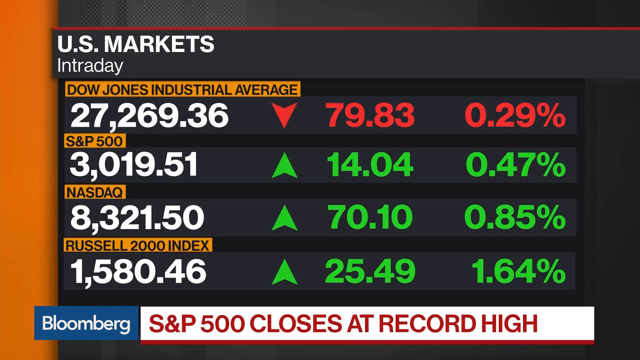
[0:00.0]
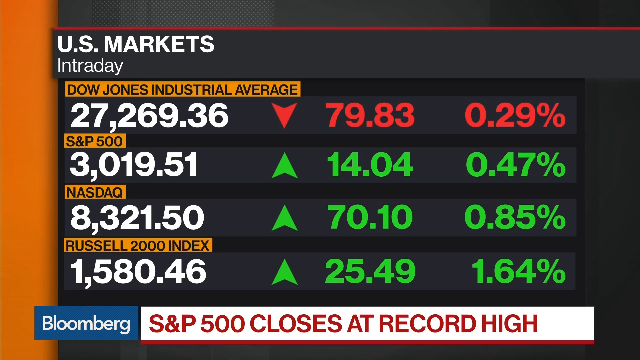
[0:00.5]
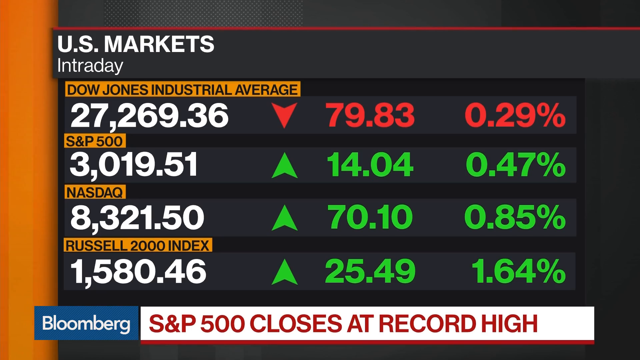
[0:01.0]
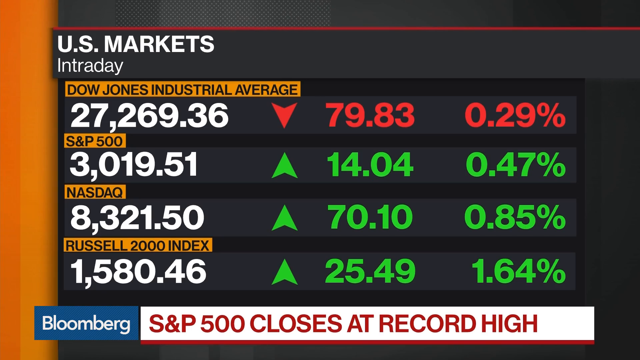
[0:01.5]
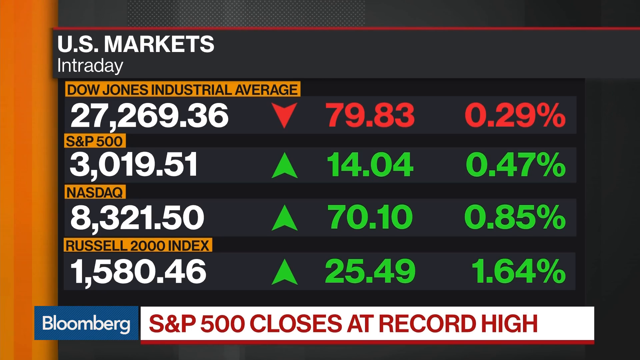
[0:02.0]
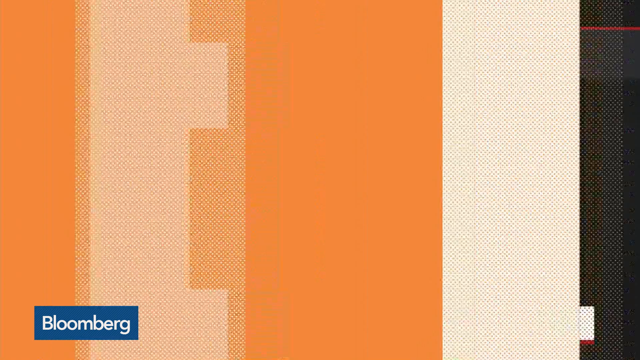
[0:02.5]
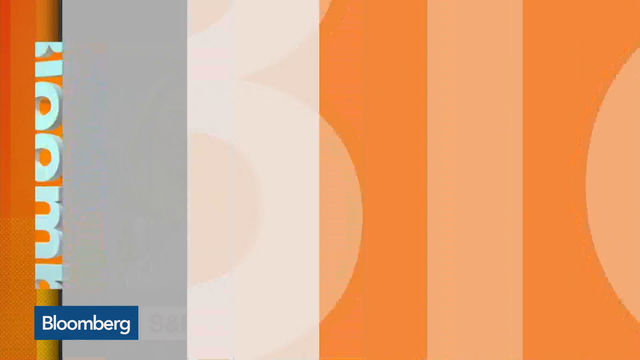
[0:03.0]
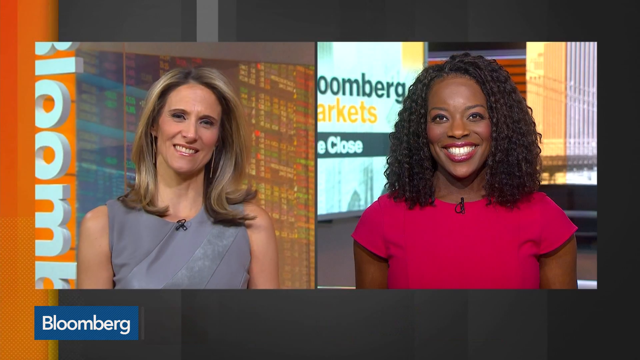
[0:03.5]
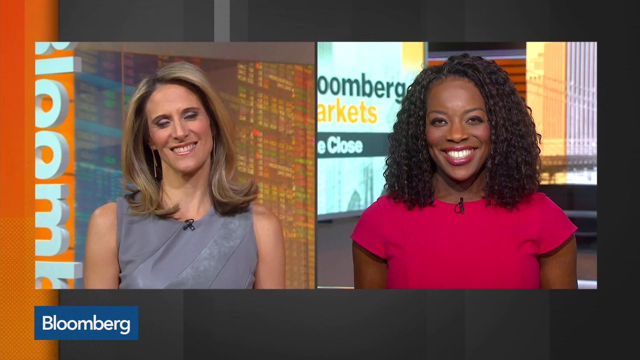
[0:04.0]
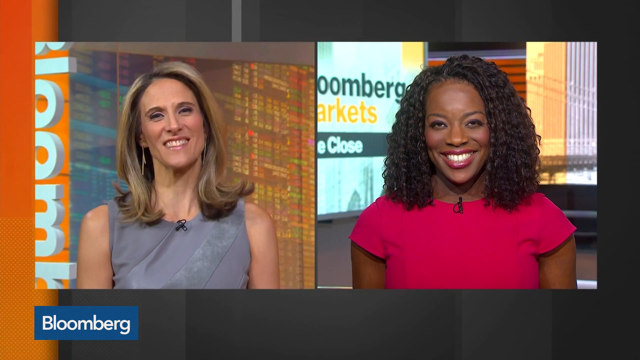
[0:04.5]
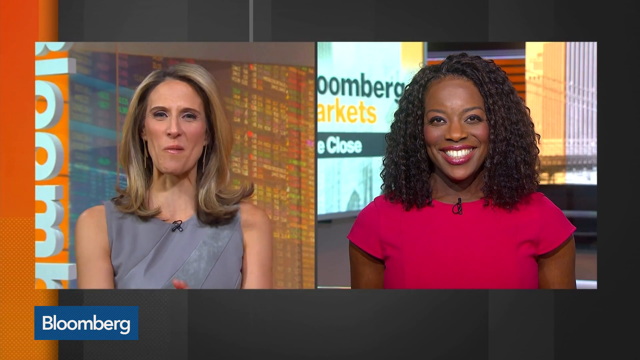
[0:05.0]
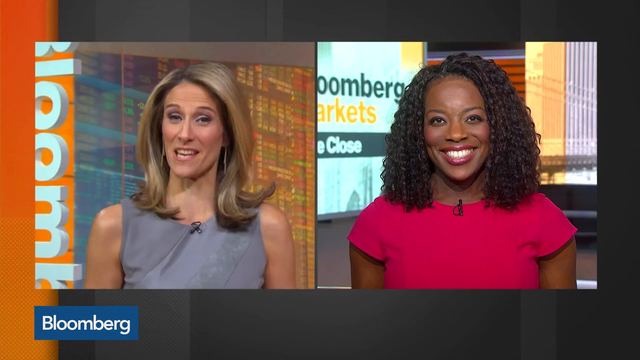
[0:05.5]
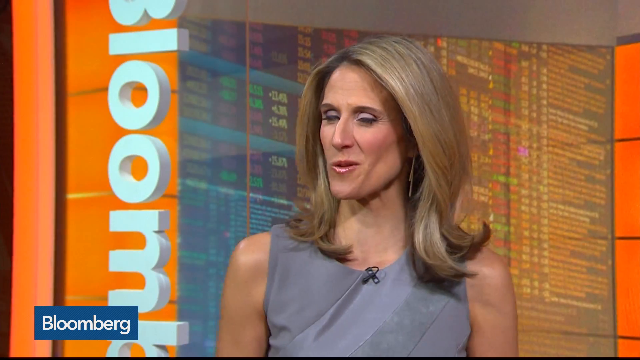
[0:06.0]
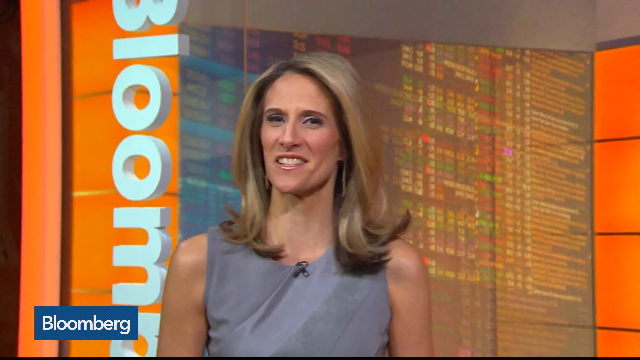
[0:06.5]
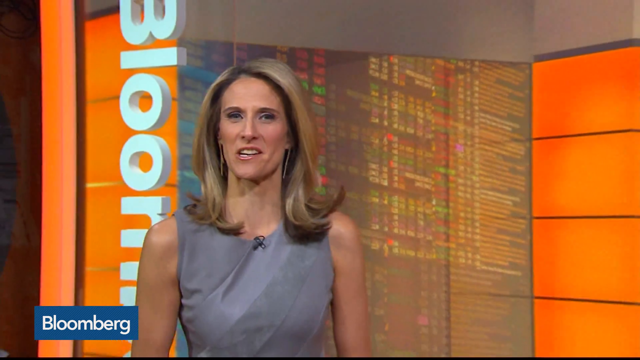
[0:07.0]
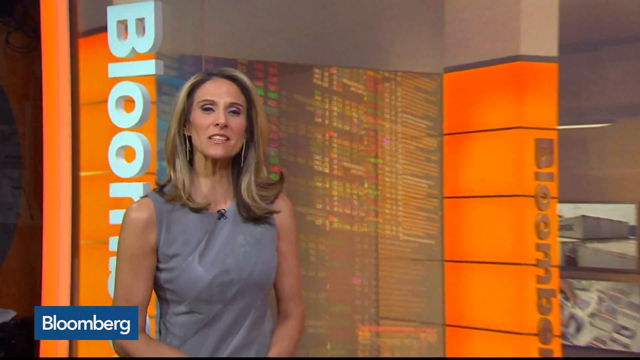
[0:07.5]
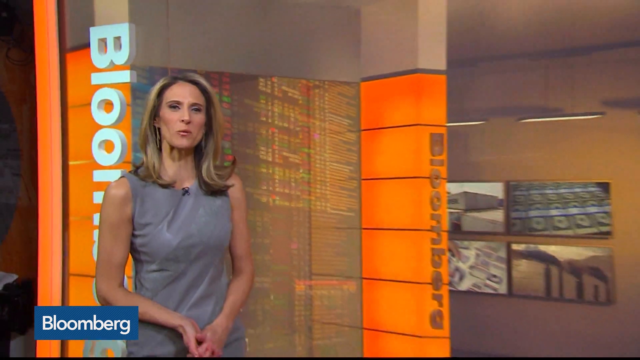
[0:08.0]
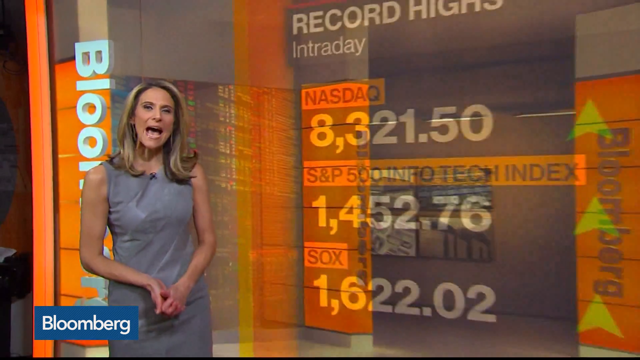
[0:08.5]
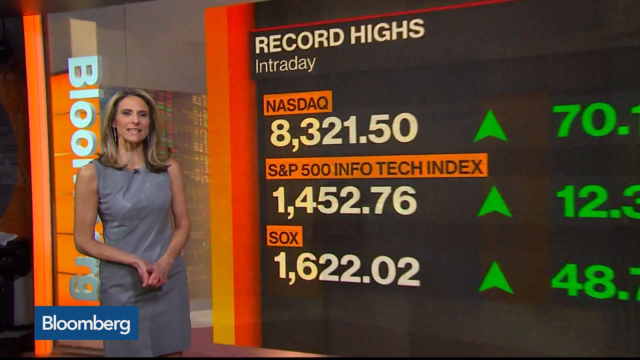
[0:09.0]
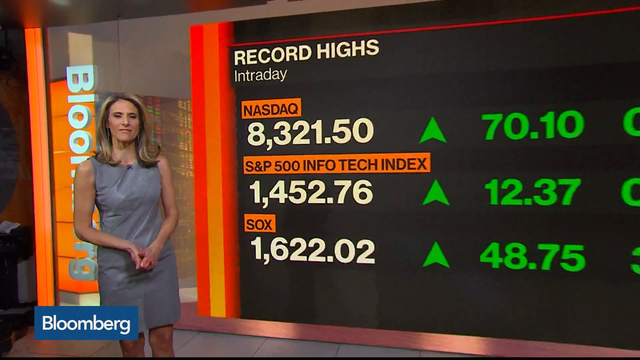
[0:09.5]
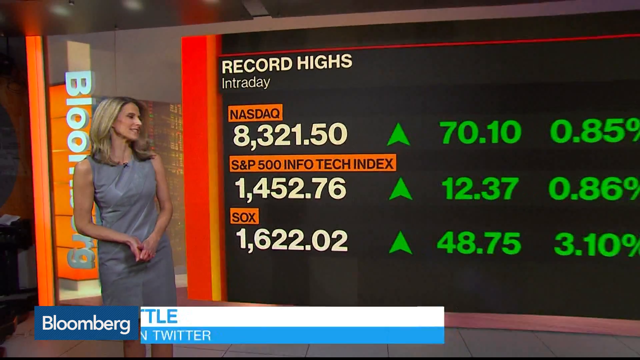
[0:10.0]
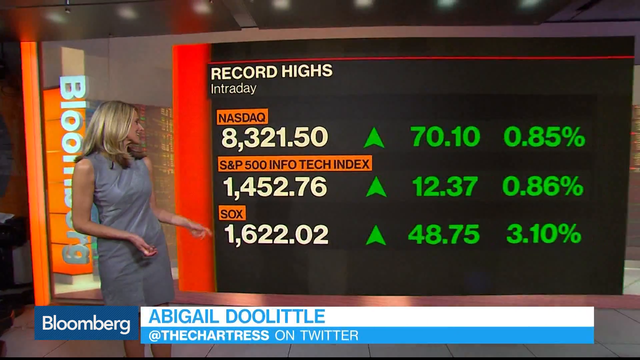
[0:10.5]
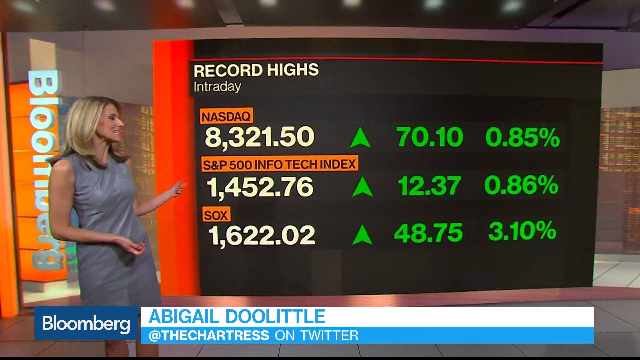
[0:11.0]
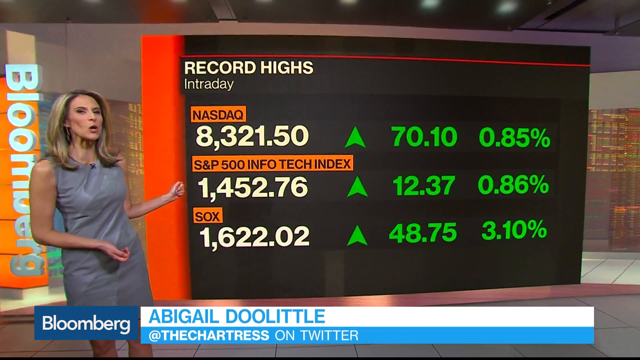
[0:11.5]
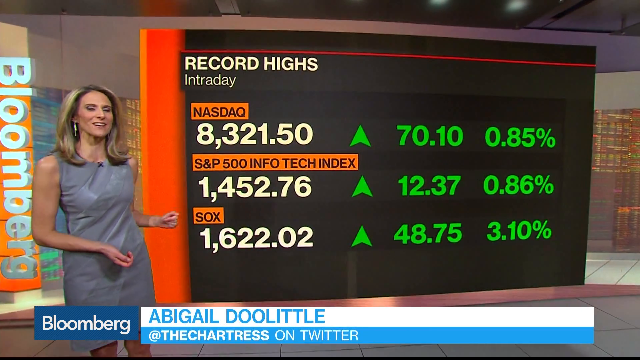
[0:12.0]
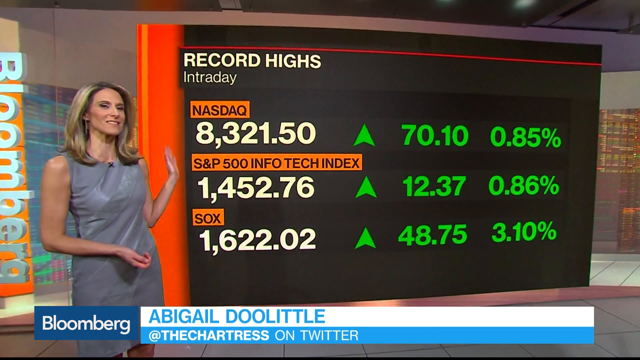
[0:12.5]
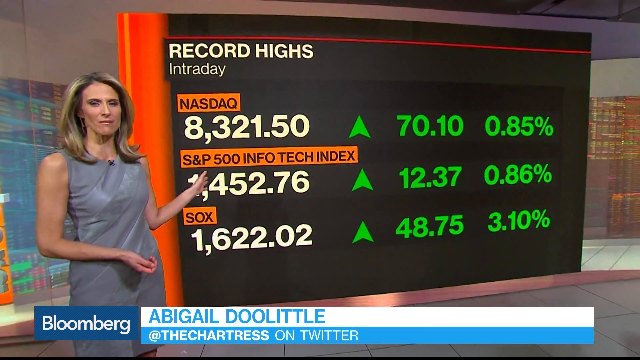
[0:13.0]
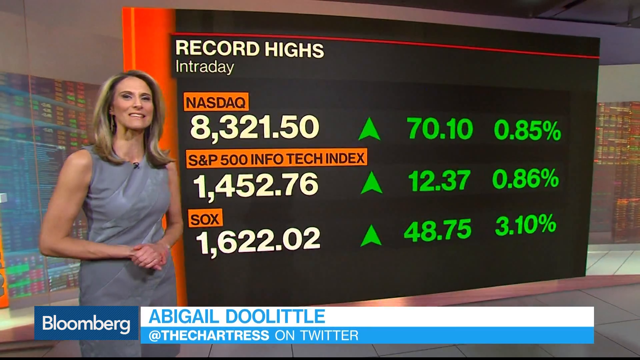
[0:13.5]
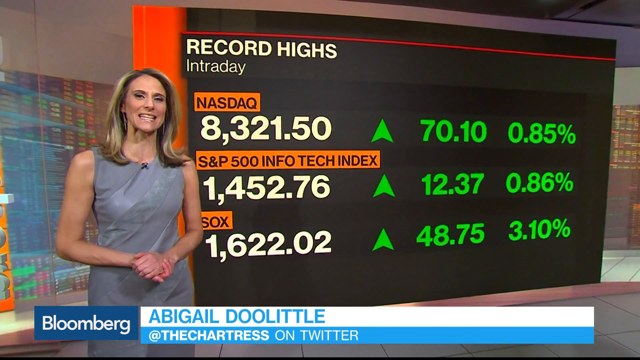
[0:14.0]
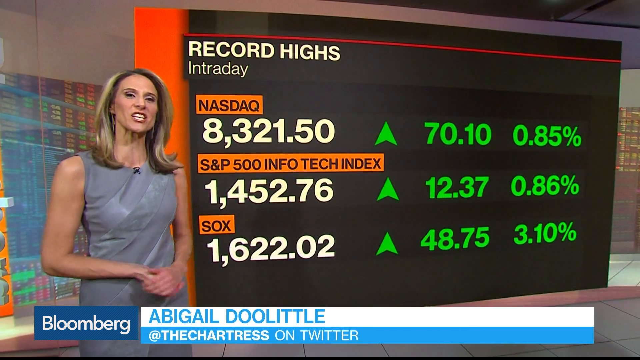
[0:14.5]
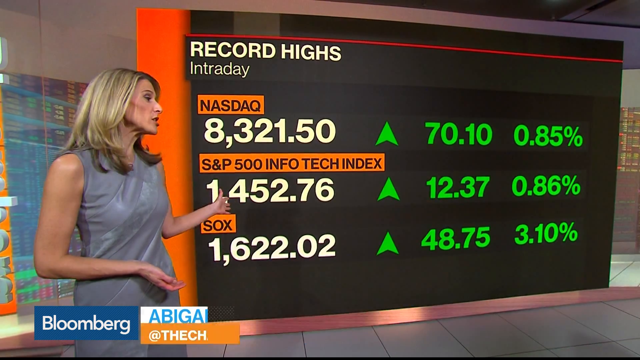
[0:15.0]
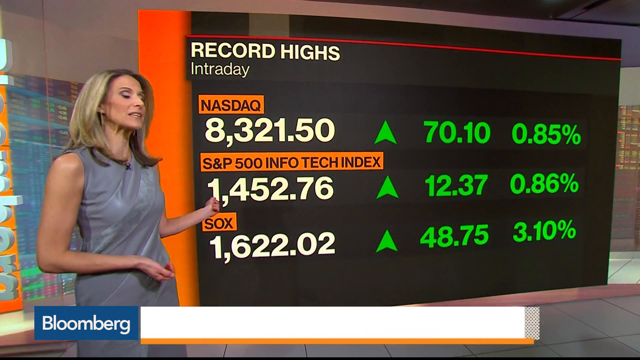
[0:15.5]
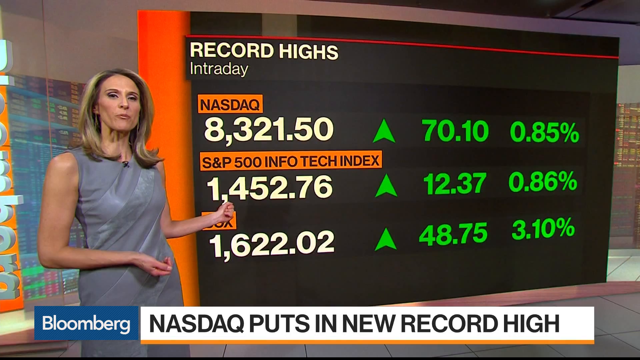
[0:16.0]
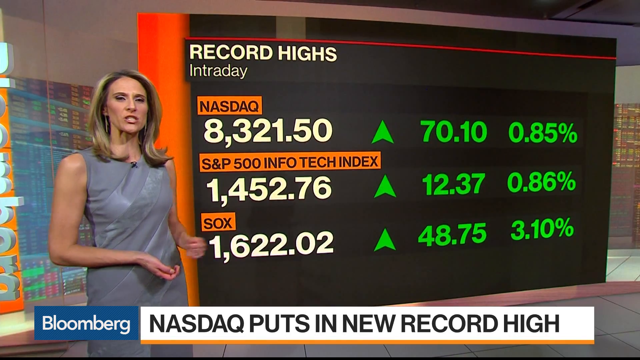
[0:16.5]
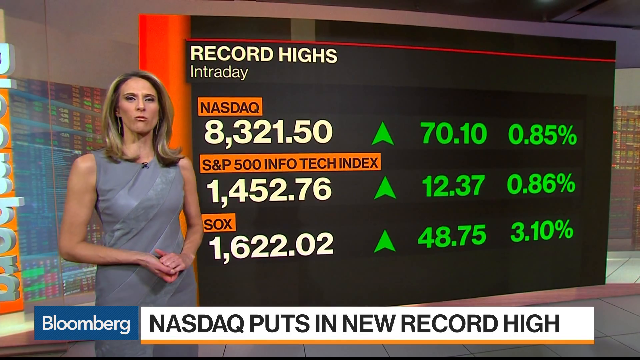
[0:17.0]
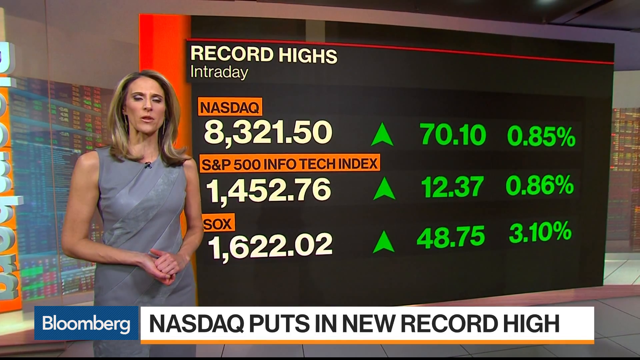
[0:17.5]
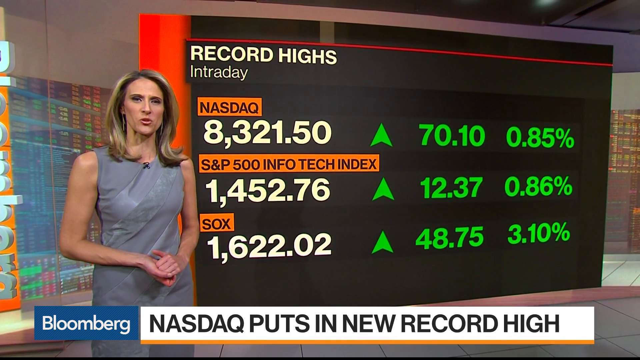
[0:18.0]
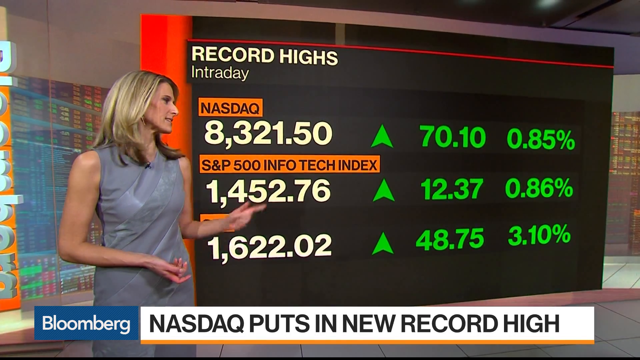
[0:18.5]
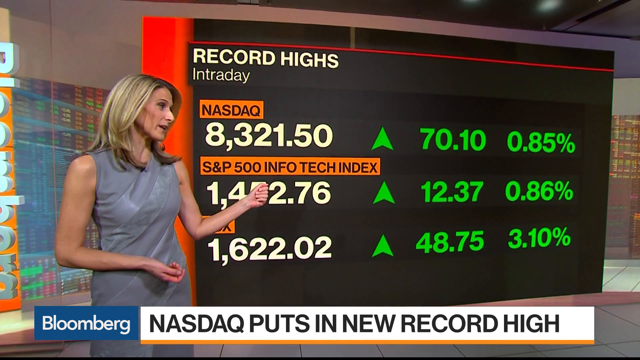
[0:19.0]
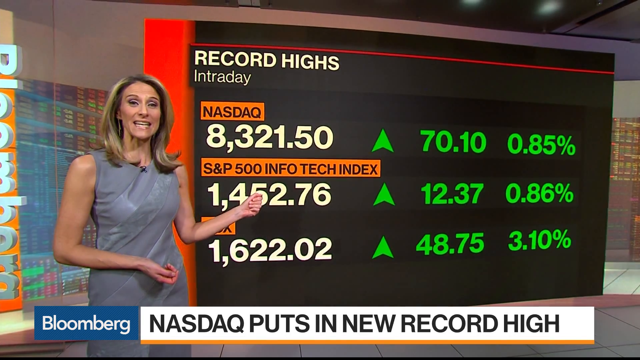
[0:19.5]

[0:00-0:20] A female news anchor is in front of a green screen indicating that the US market was at an all-time high. The screen goes on to show the Dow Jones report, such as the S&P 500 and the NASDAQ, as well as the Russell 2000 index. The anchor wears a gray dress with very short sleeves cut off around the shoulder area, and she has mid-length, dark dirty blonde hair. Shortly after the video begins, a second female news anchor pops up in a small square for a short time; she is African American and wearing pink. A blue square at the bottom left of the screen says "Bloomberg," marking this as a Bloomberg news clip. The blonde anchor is named Abigail Doolittle, and her report concerns the NASDAQ putting in a new record high and the S&P 500 closing at a record high. The intraday information stays on the screen for a few seconds before it switches to a different screen showing the U.S. markets.